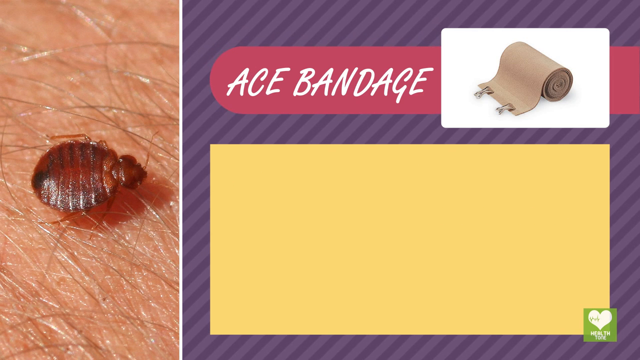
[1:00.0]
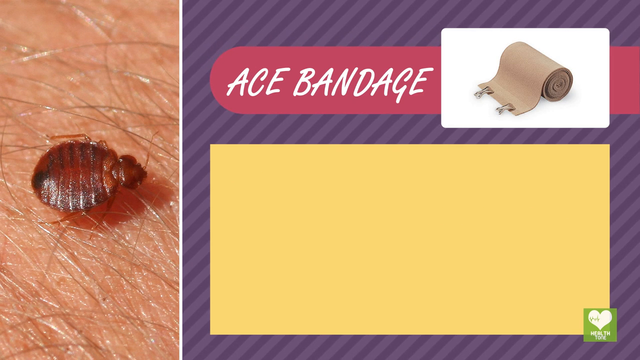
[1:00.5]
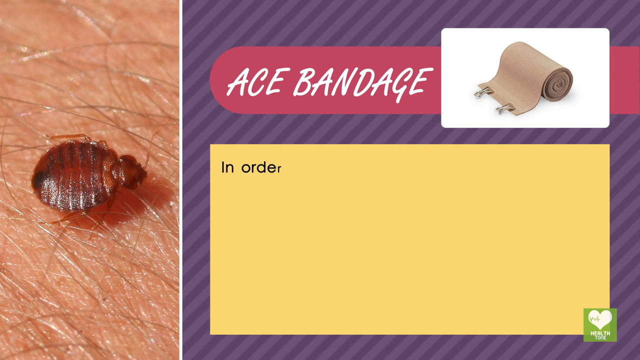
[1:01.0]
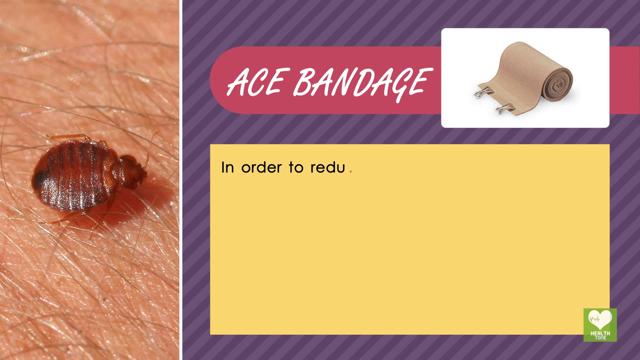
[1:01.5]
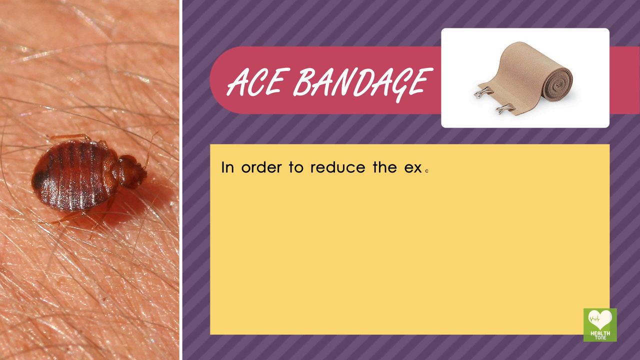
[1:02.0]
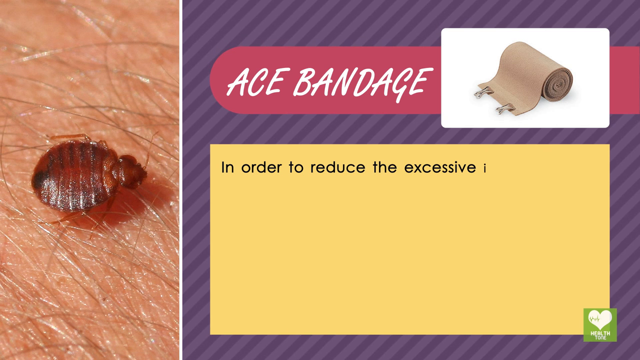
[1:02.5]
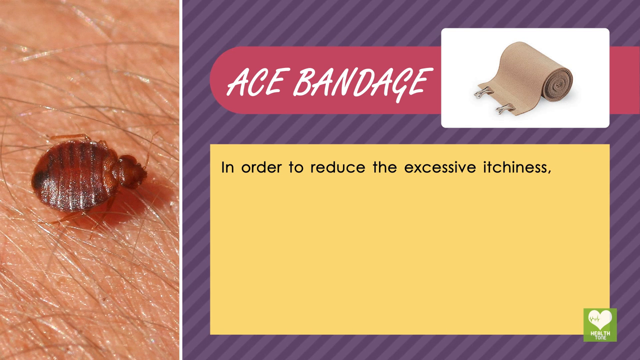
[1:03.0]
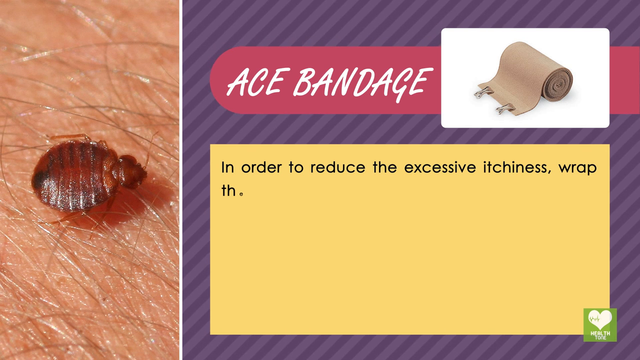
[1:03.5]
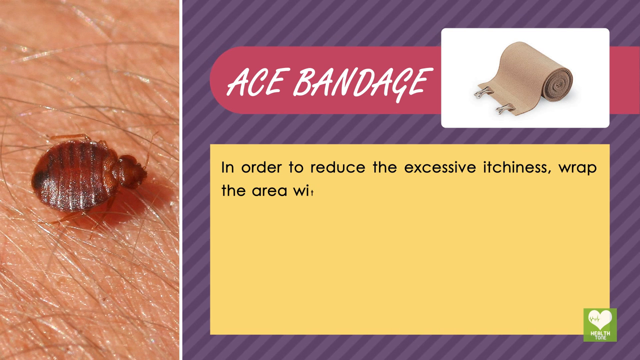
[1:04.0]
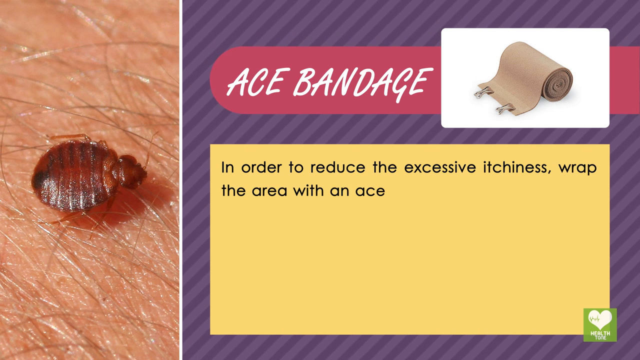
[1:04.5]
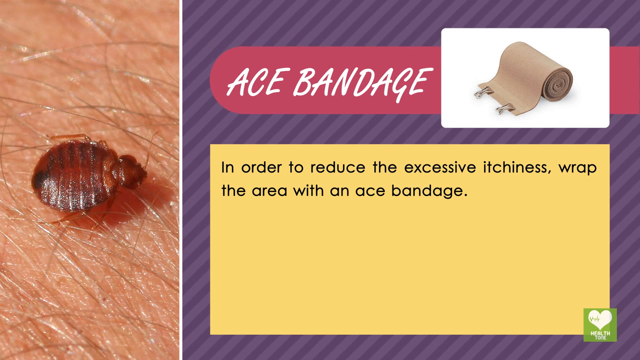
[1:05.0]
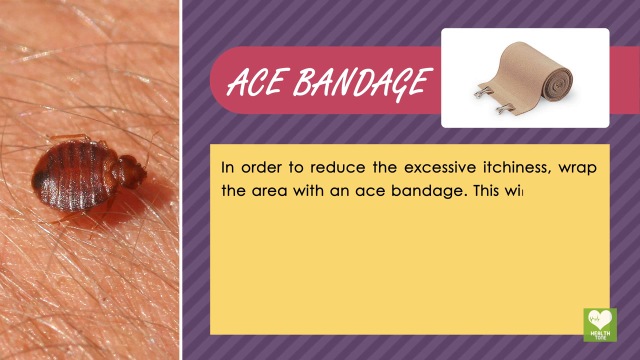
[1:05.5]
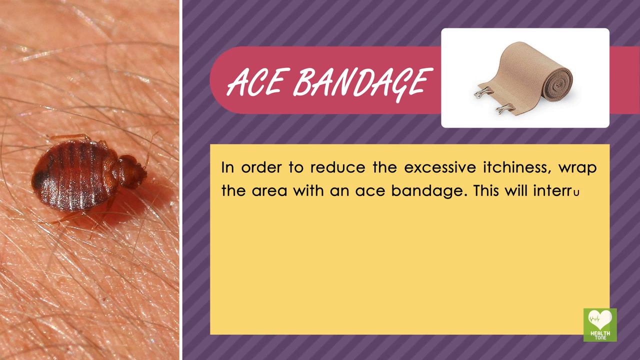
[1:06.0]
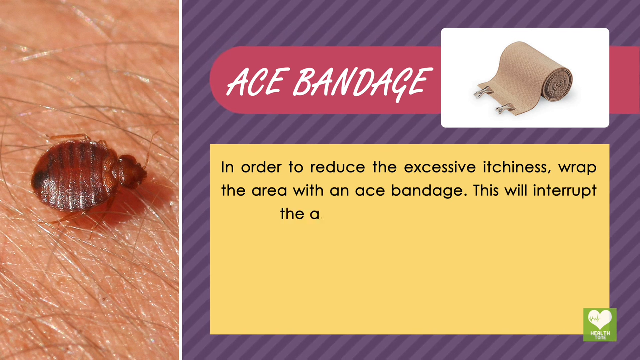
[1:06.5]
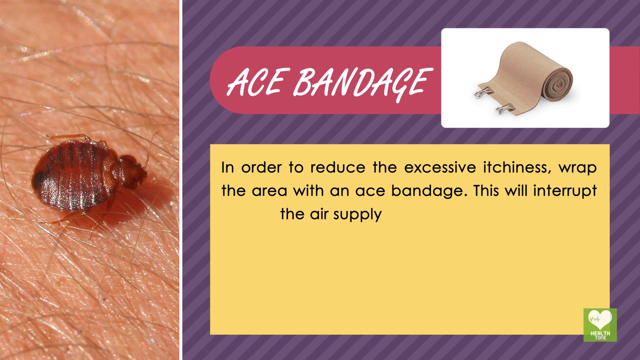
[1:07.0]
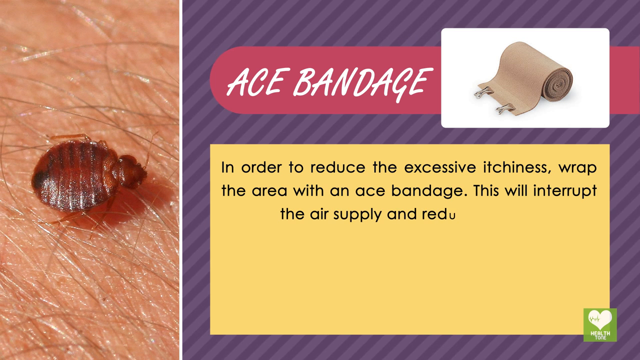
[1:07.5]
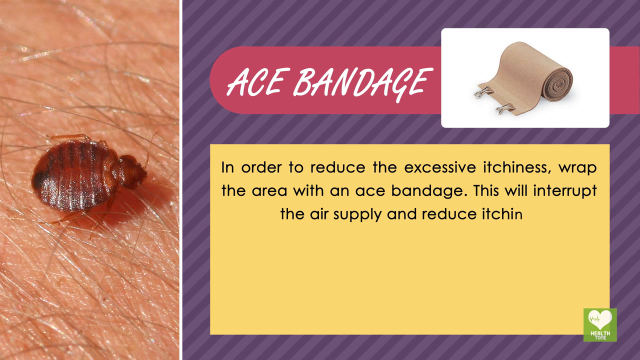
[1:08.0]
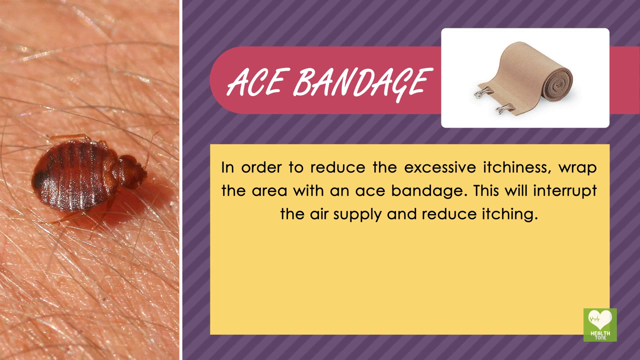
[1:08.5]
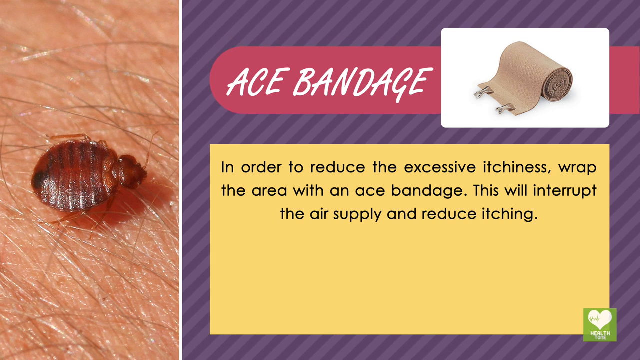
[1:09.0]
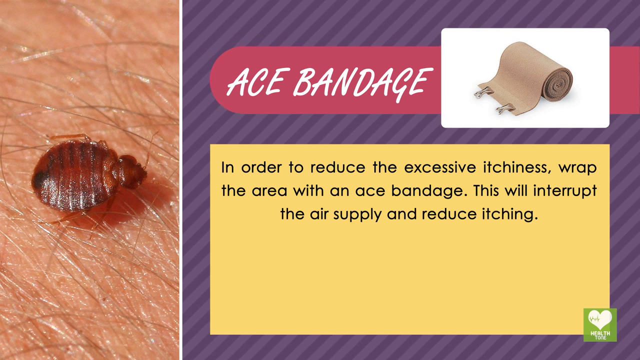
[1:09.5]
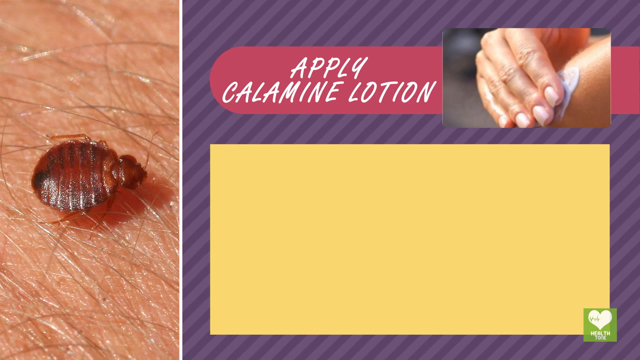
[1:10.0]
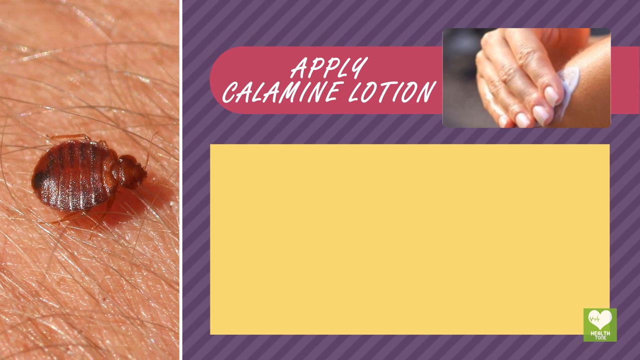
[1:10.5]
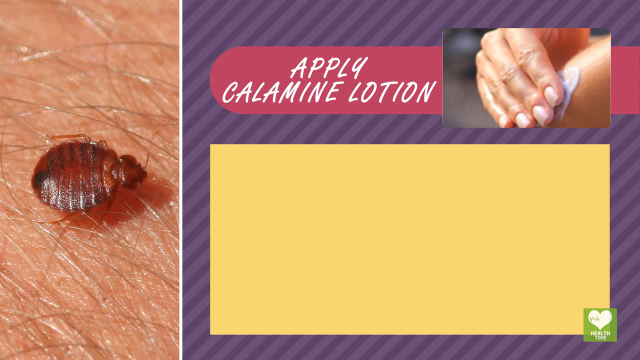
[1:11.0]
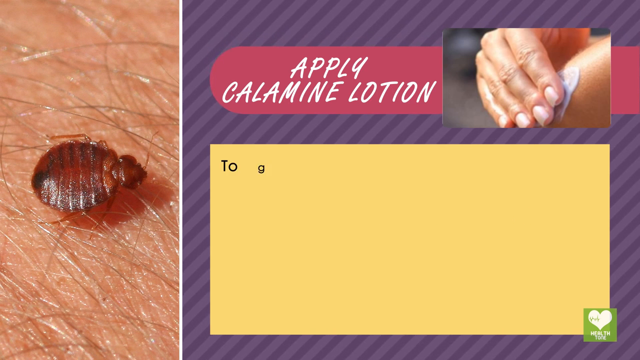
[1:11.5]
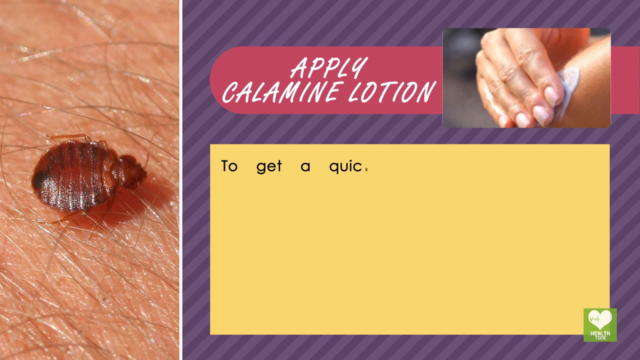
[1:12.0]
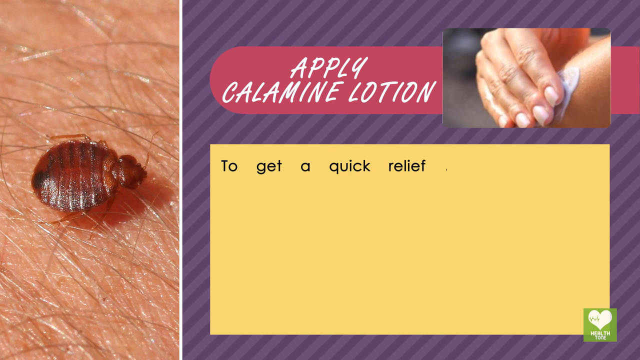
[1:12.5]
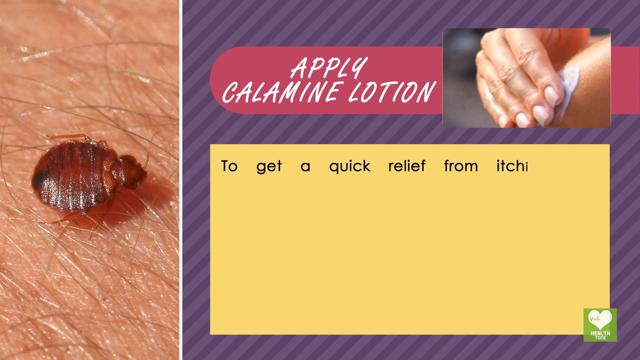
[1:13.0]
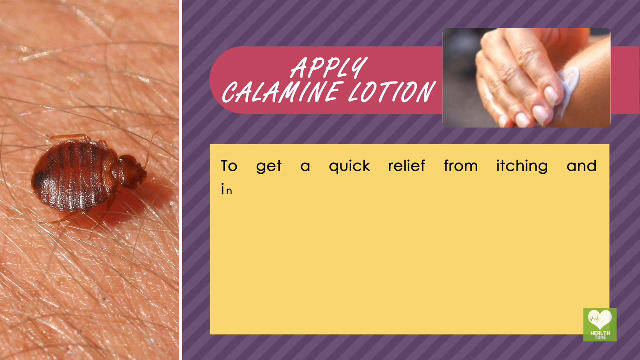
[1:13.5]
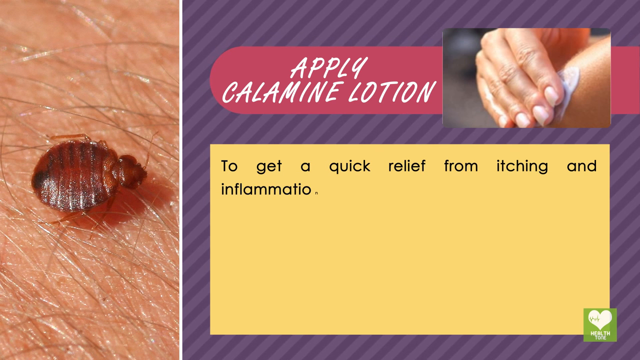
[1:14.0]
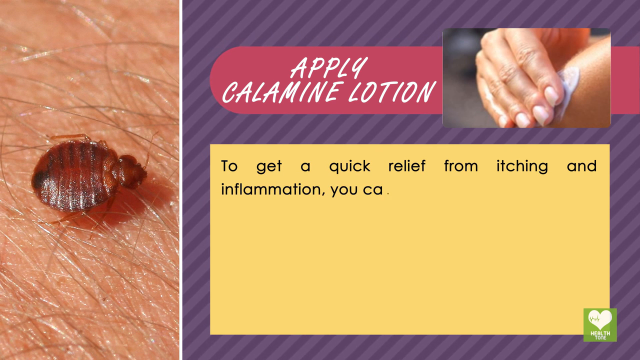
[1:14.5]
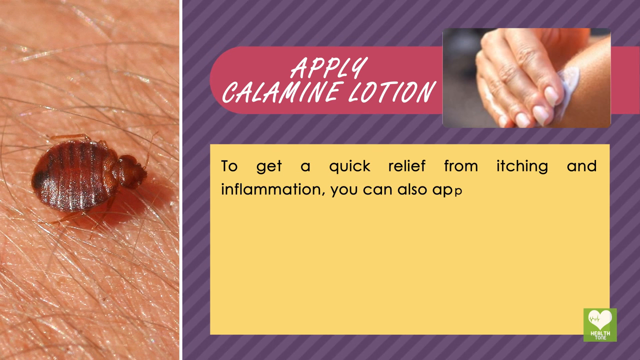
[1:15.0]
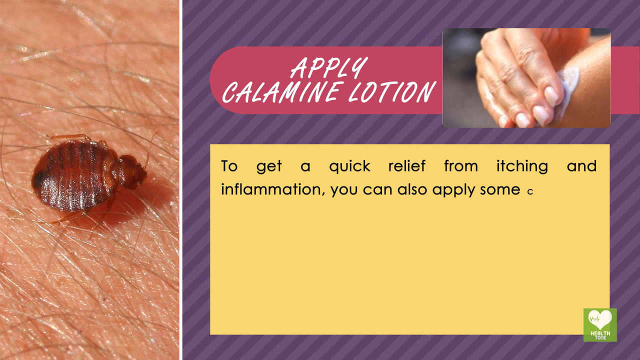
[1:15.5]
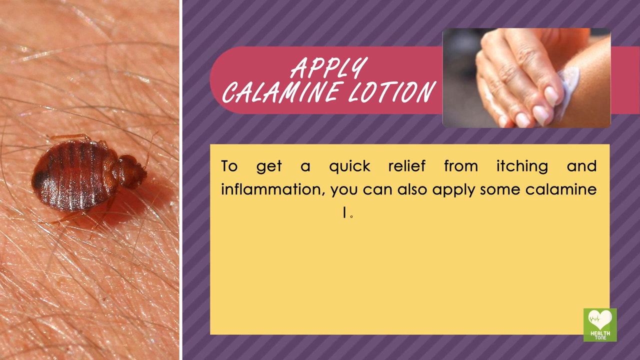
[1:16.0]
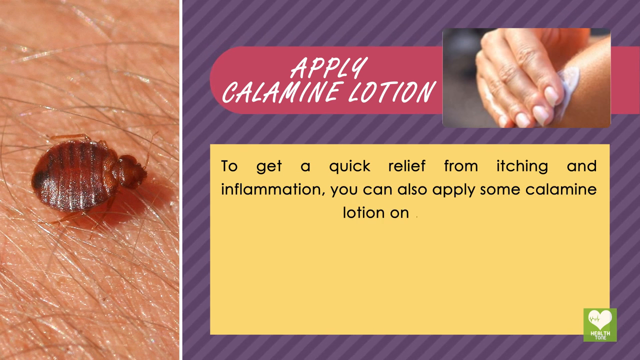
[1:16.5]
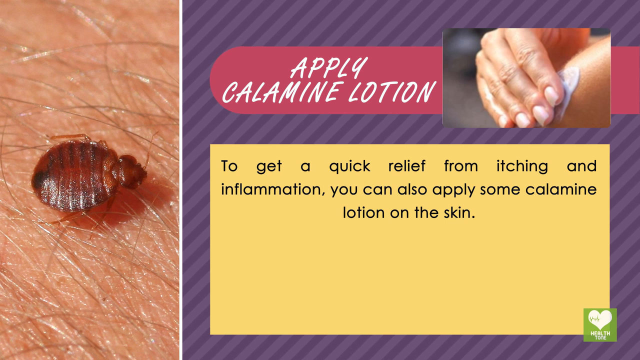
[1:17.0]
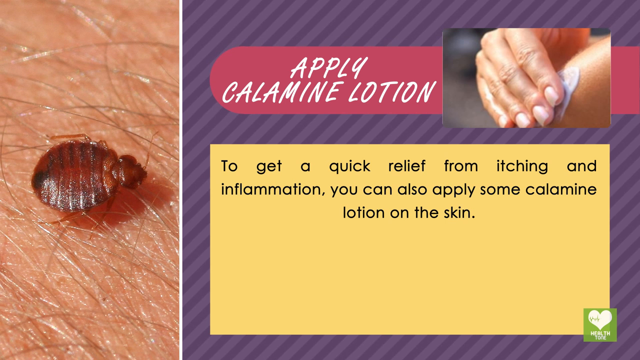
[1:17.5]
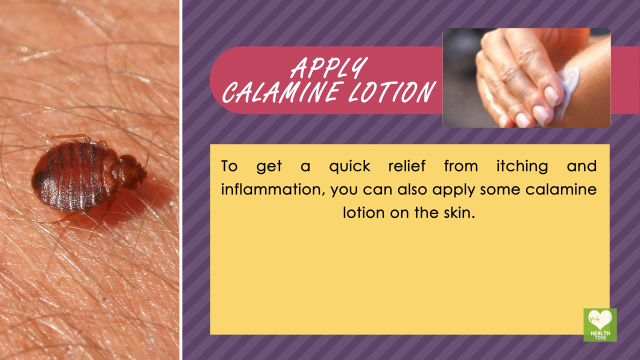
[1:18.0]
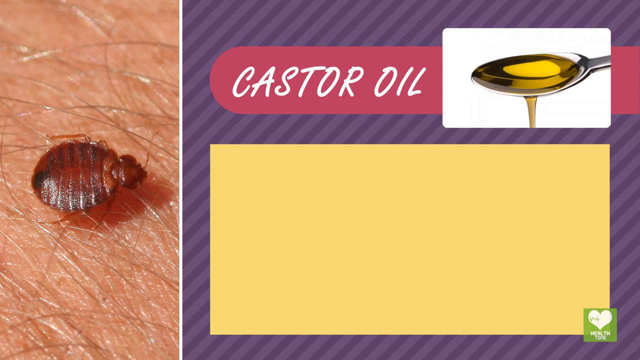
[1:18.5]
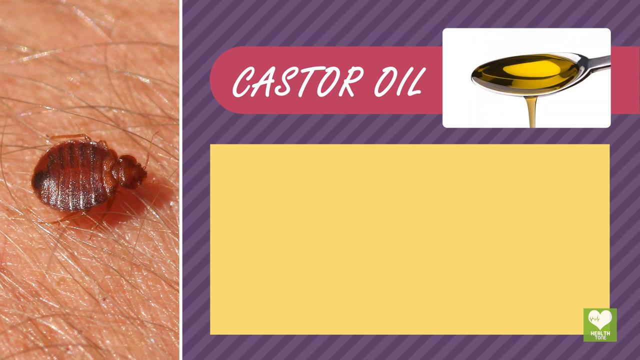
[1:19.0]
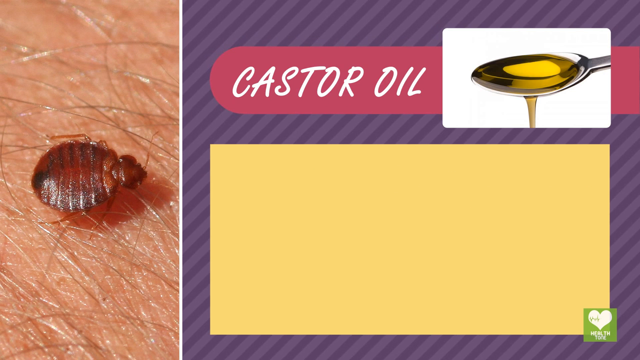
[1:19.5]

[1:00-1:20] The instructions in the yellow box read: "in order to reduce the excessive itchiness, wrap the area with an ace bandage. This will interrupt the air supply and reduce itching." The next remedy is "apply calamine lotion," shown in the header bar, with the word "apply" centered directly above "calamine lotion." The picture to the right shows a hand massaging calamine lotion onto part of the body, perhaps an arm or an elbow. The yellow box instructions say: "to get a quick relief from itching and inflammation. You can also apply some calamine lotion on the skin." The next part of the video is castor oil: the words "castor oil" are in the headline, and the image shows a silver spoon with yellow oil dripping off its front, which faces the text directly to the left.